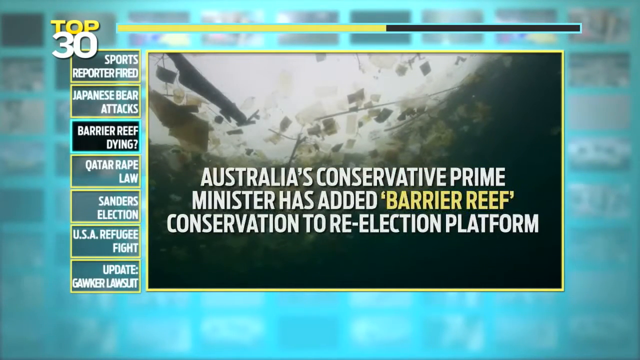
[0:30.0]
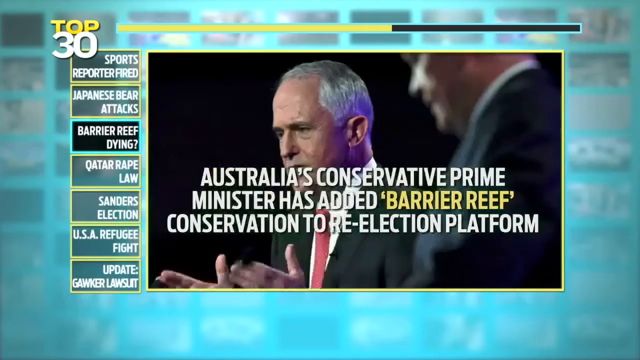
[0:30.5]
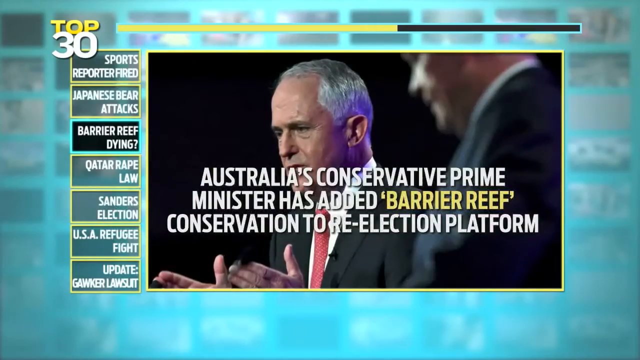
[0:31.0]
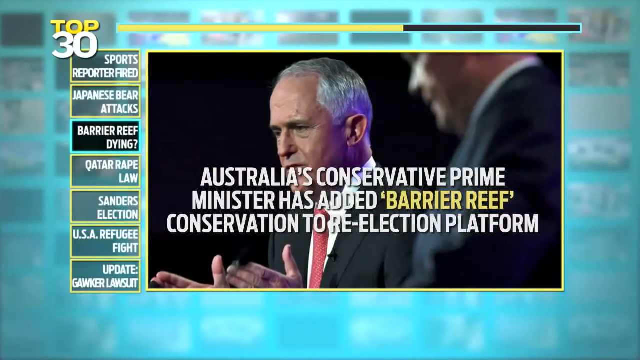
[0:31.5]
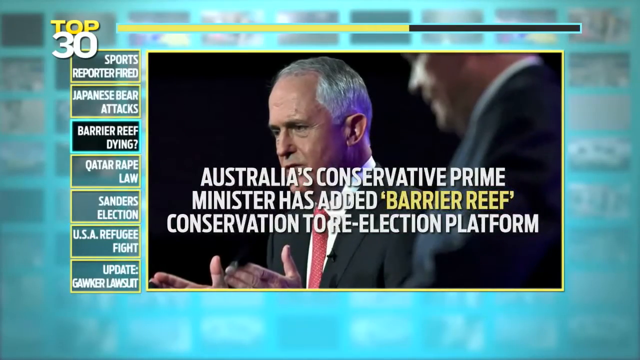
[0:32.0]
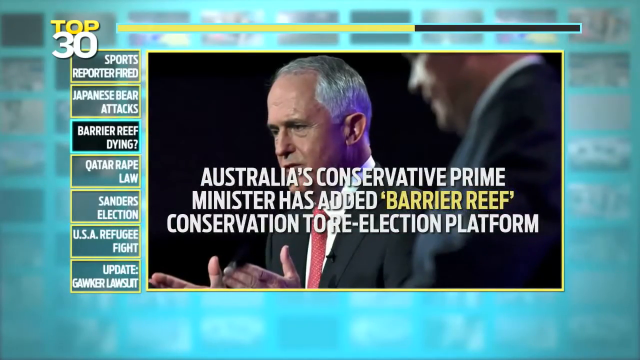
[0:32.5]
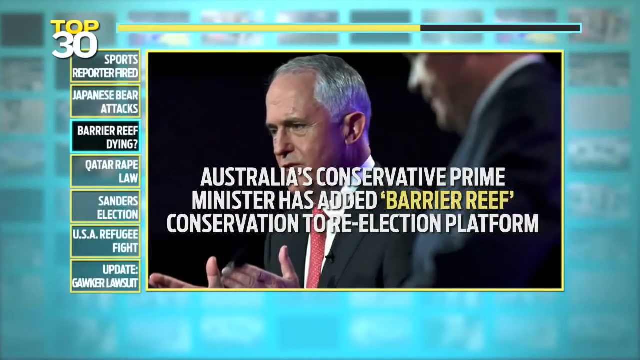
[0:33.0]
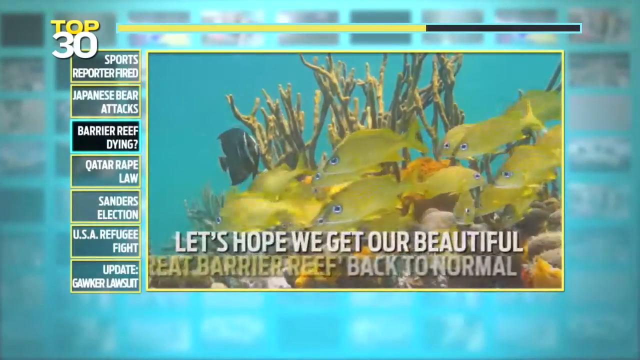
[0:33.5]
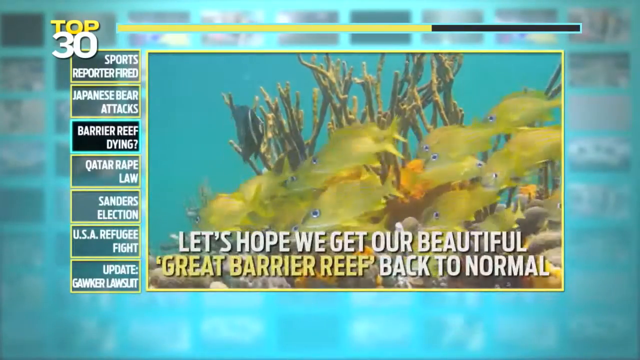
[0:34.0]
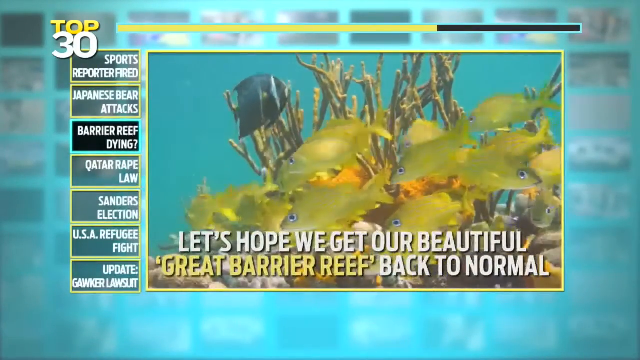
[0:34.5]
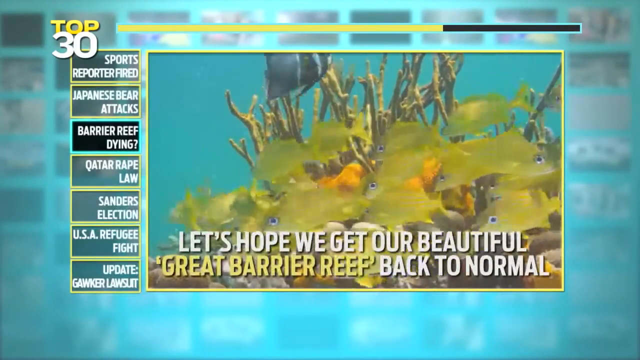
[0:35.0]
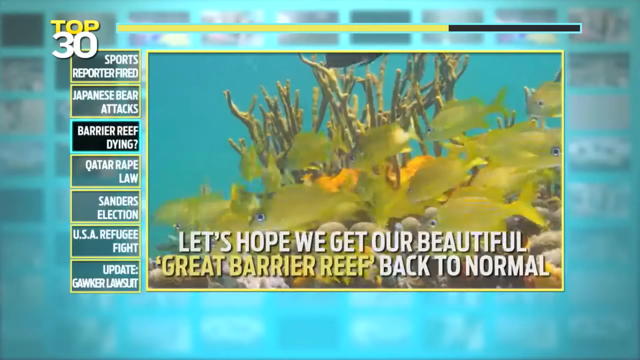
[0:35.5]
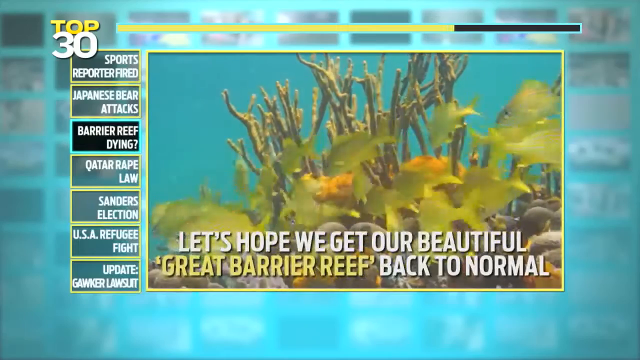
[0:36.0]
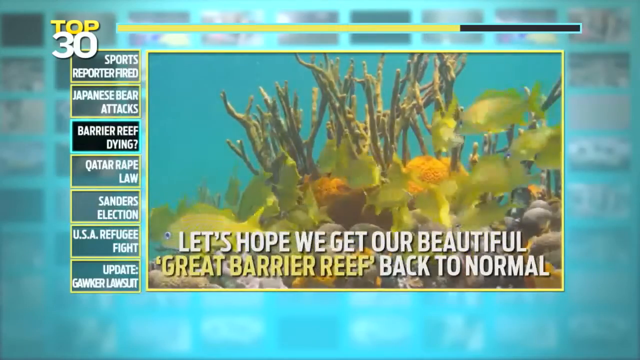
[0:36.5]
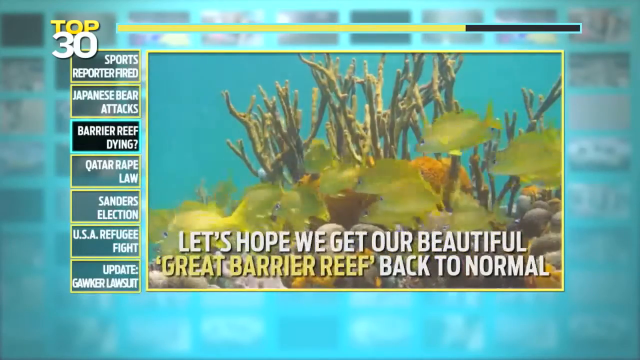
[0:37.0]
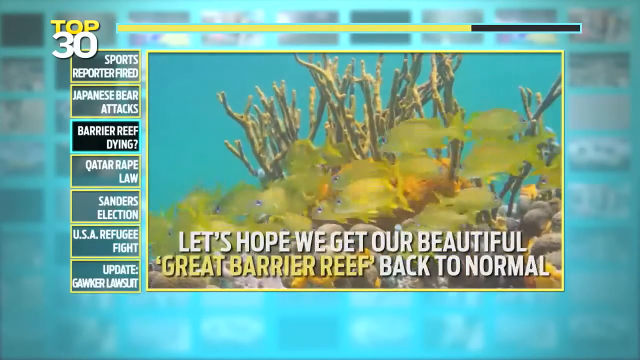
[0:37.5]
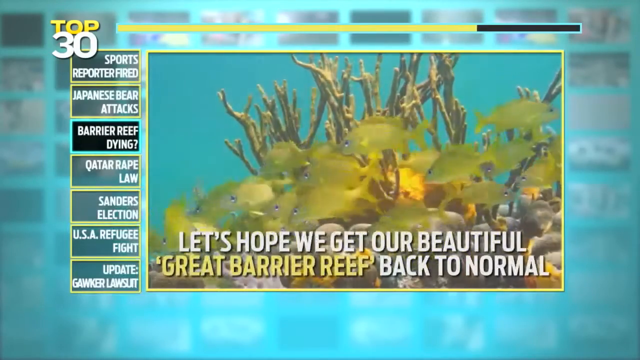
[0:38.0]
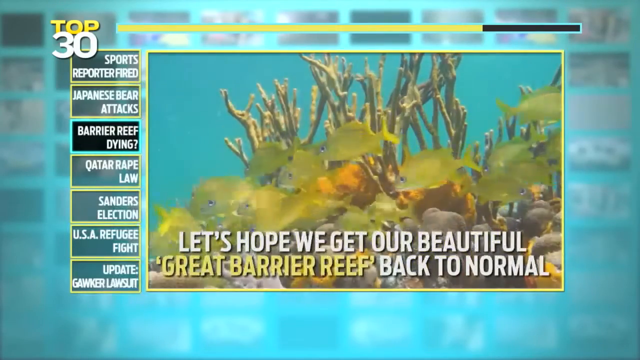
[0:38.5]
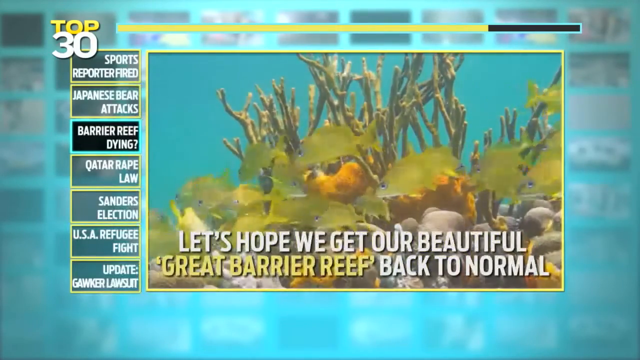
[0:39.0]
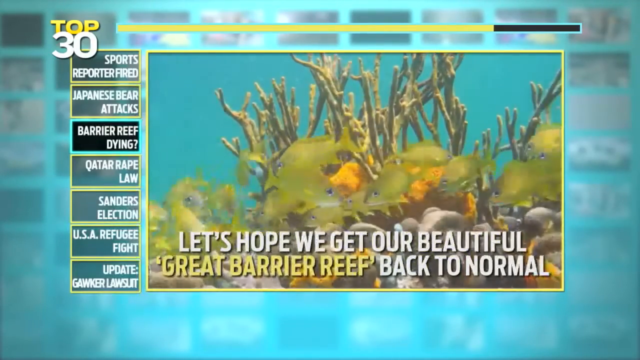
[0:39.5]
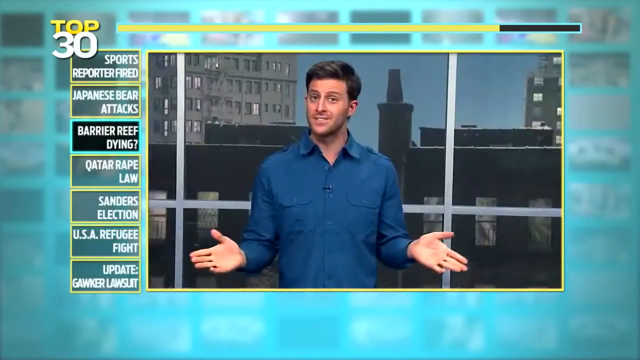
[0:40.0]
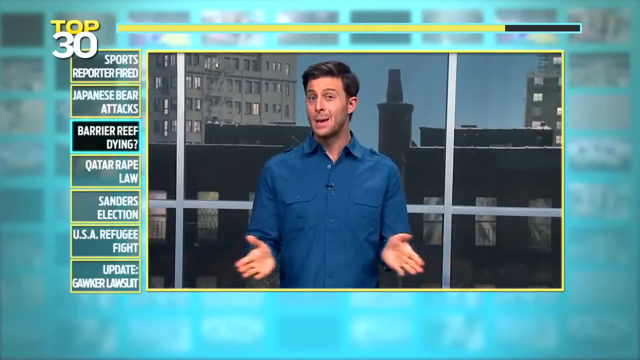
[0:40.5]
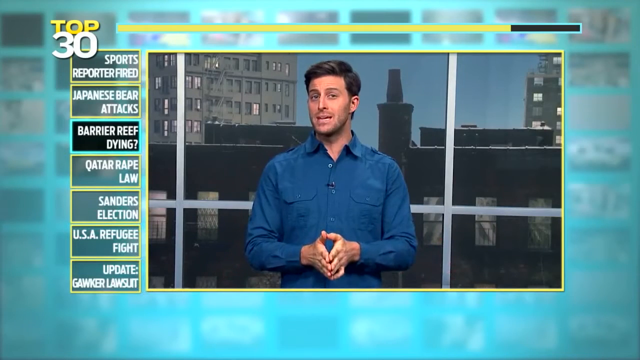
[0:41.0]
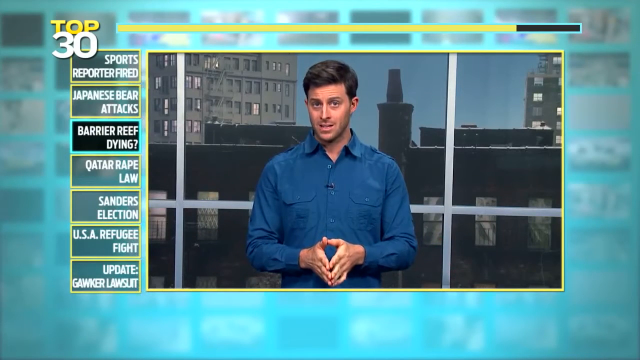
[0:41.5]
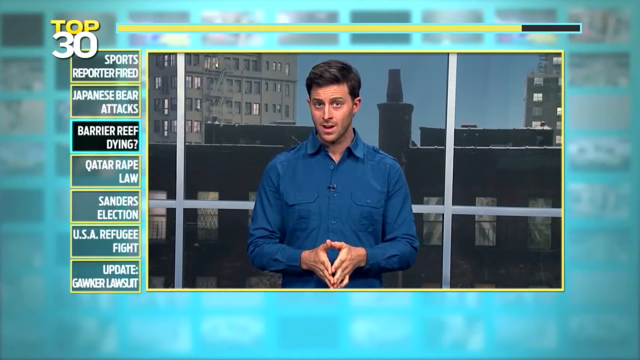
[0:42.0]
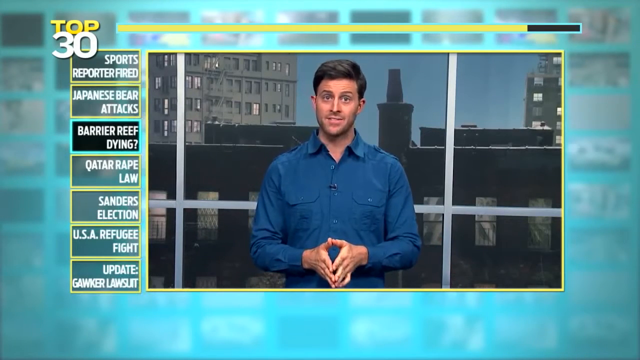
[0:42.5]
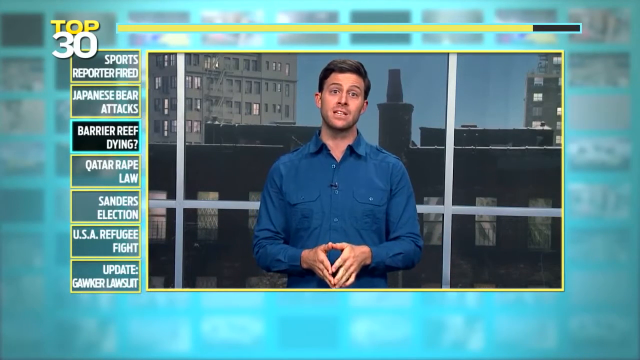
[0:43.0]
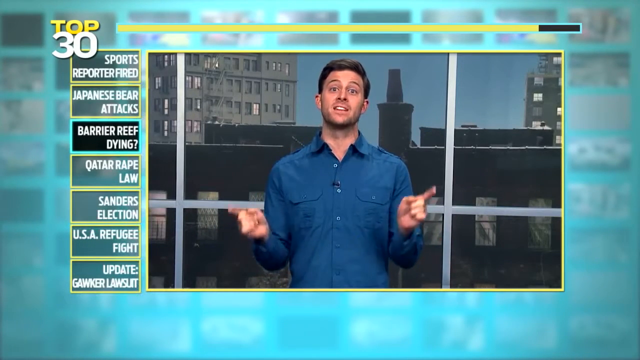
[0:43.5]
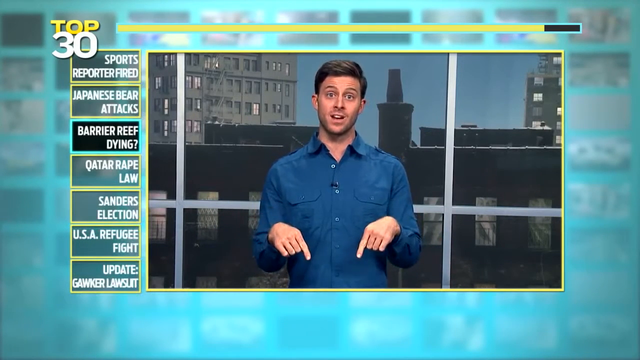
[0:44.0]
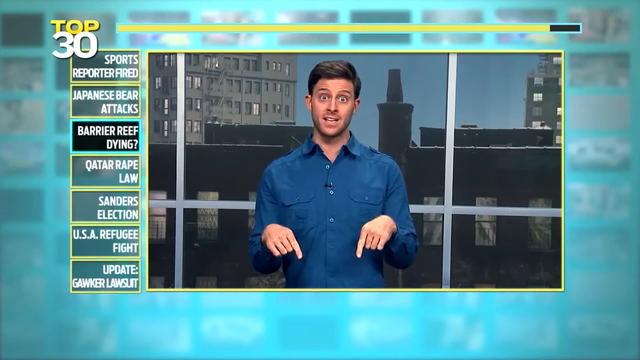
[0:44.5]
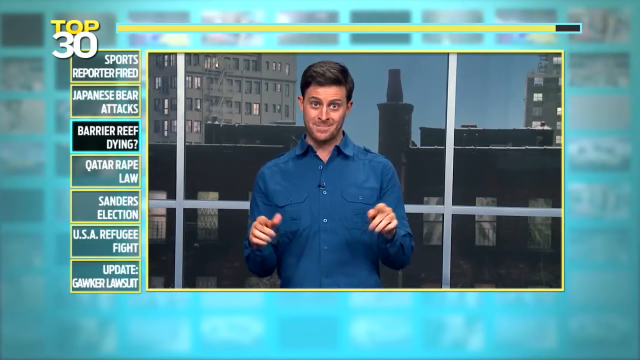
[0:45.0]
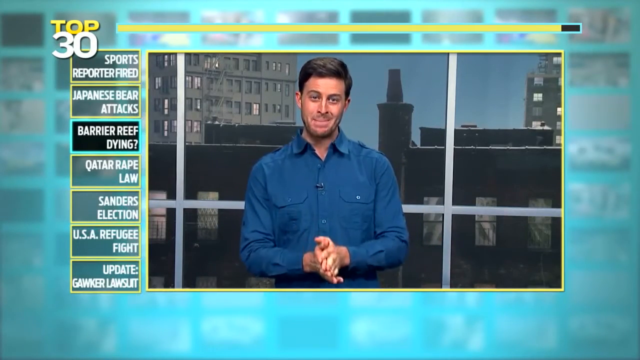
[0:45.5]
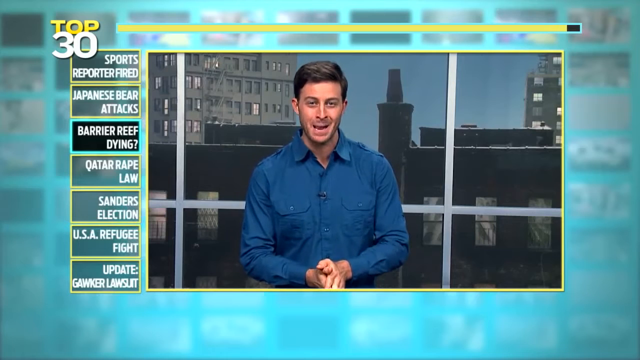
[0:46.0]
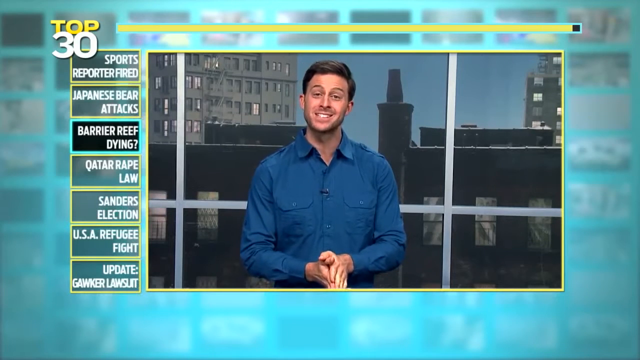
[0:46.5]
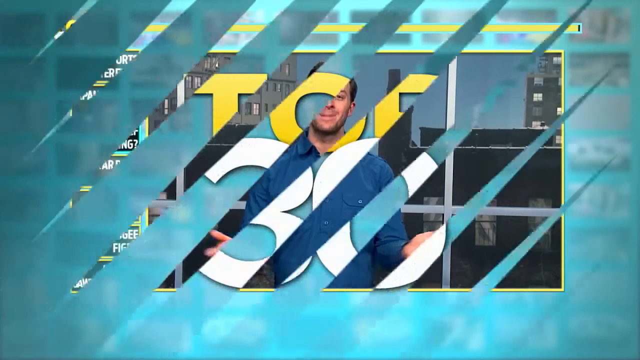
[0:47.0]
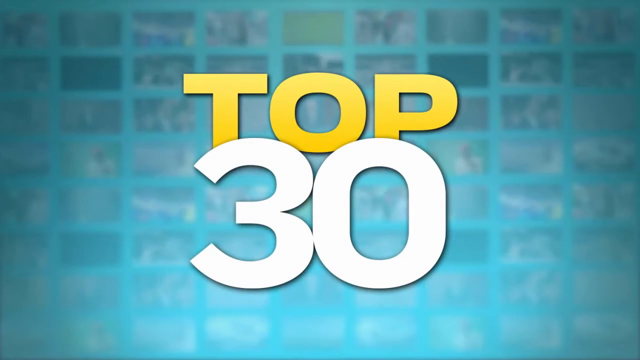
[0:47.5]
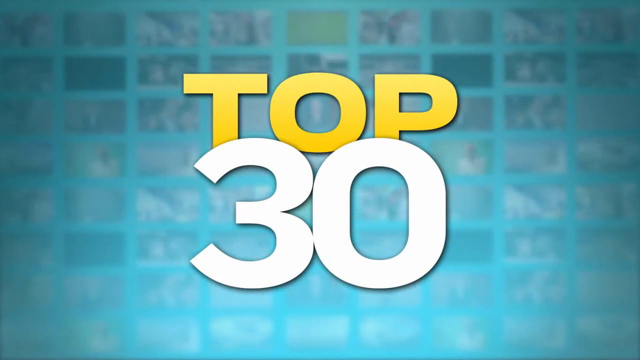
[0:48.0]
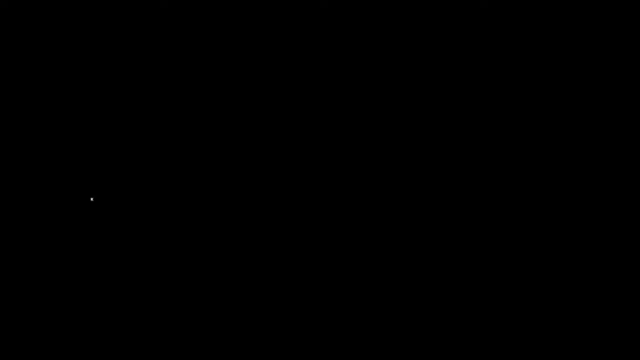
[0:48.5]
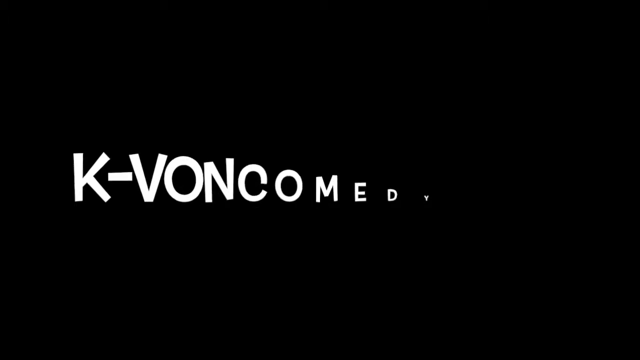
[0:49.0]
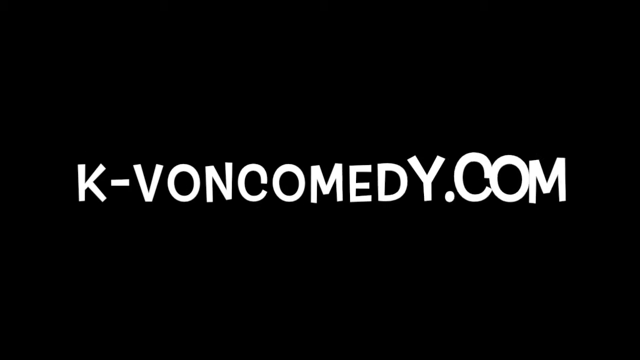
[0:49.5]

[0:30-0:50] The same text about adding barrier reef conservation to the re-election platform remains as the minister is shown with his hands up, looking off into the distance. He is in a suit, and a man in a suit is to his left. The progress bar looks about two-thirds done. In the next shot, text at the bottom center reads "let's hope we get our beautiful great barrier reef back to normal", with "great barrier reef" in yellow. A bunch of yellow fish swim around, a pointed piece of reef sticks up, and a black angelfish with a couple of white stripes running up and down its side swims by. Then the white man in long blue sleeves is shown standing by himself in the center, holding his hands out and clapping them together while speaking, looking a little off to the right. He points down, probably to subscribe, and holds his hands together. The video returns to the "top 30" screen with the animated TVs behind, the blue border, and a black background. Text in all caps is spelled out from left to right, with each letter coming down one at a time, almost like dominoes.